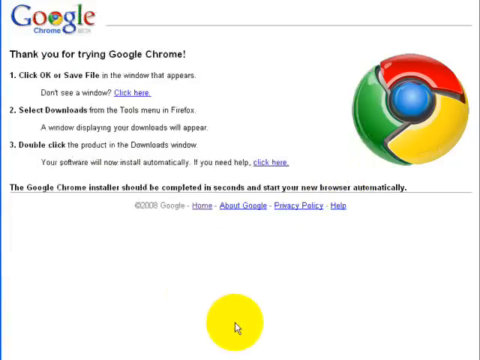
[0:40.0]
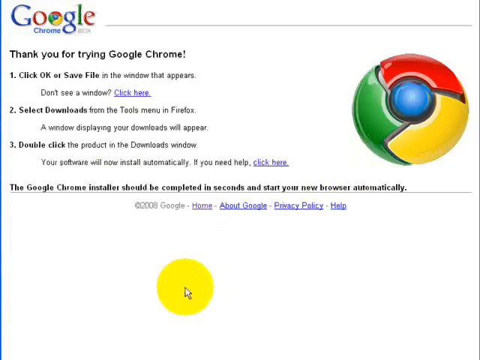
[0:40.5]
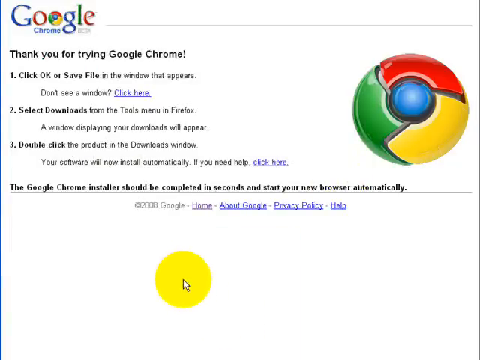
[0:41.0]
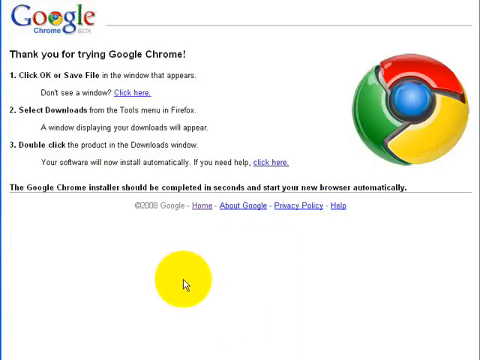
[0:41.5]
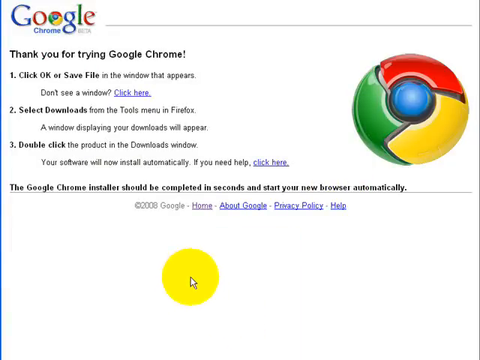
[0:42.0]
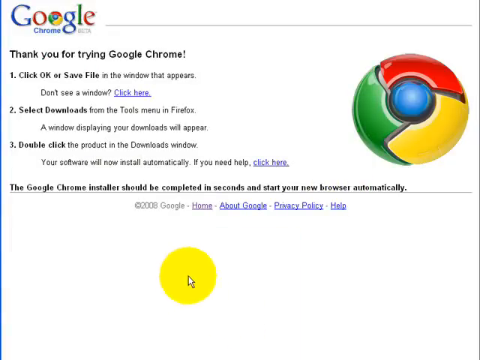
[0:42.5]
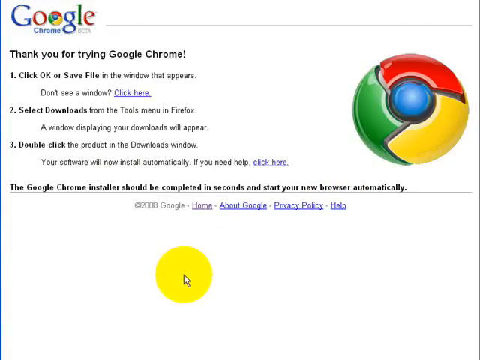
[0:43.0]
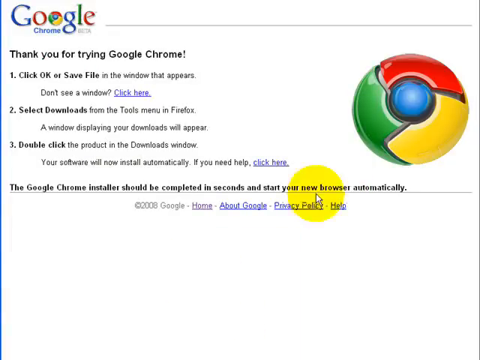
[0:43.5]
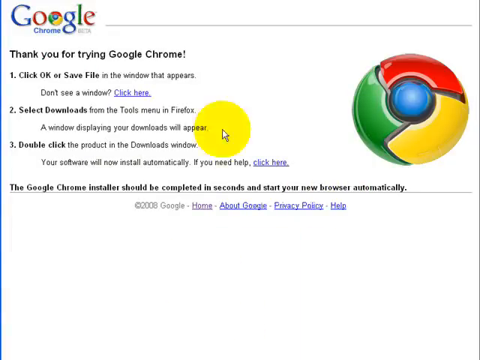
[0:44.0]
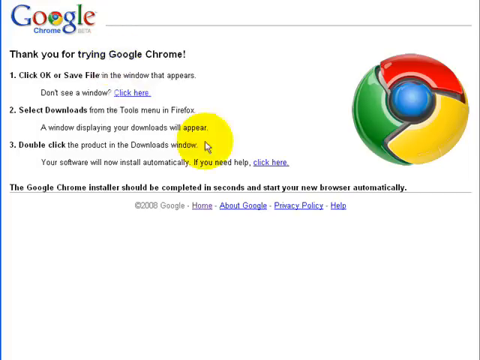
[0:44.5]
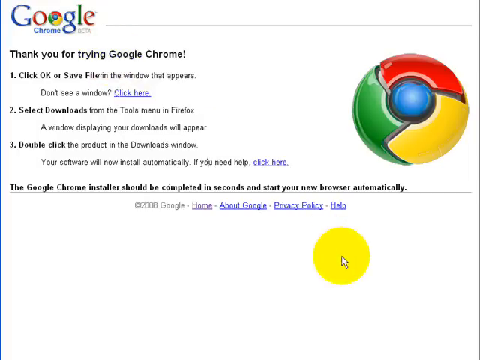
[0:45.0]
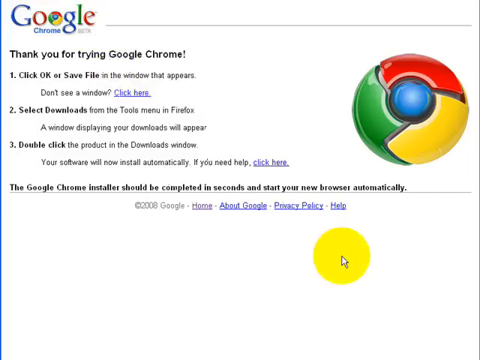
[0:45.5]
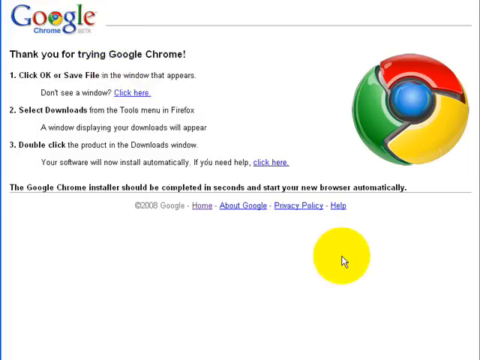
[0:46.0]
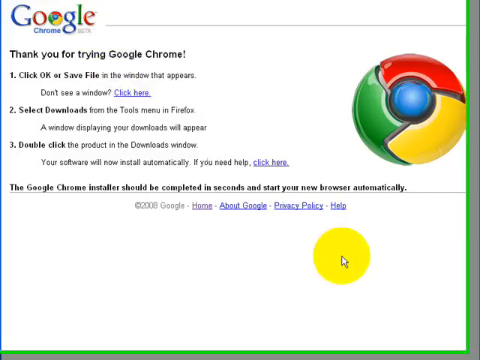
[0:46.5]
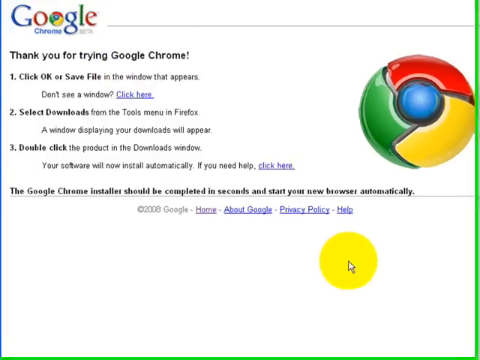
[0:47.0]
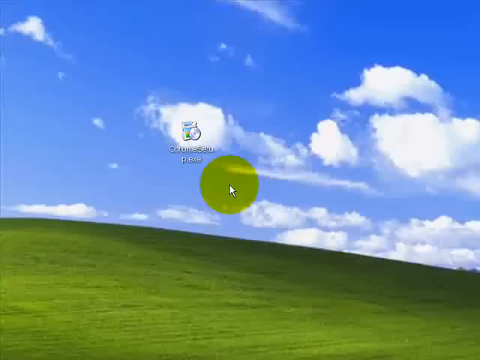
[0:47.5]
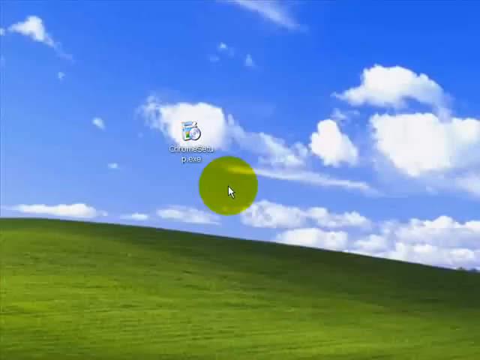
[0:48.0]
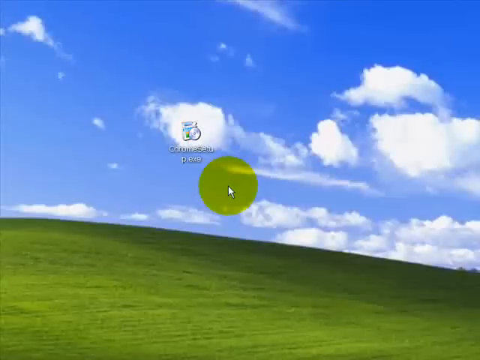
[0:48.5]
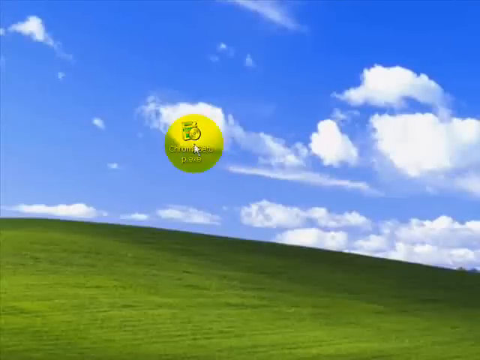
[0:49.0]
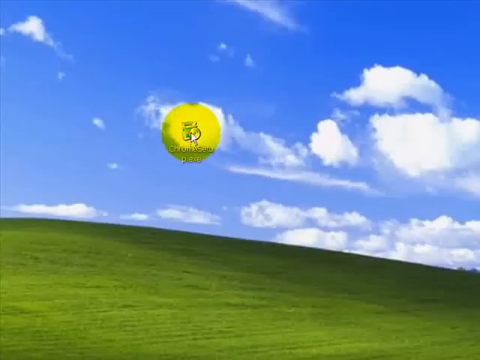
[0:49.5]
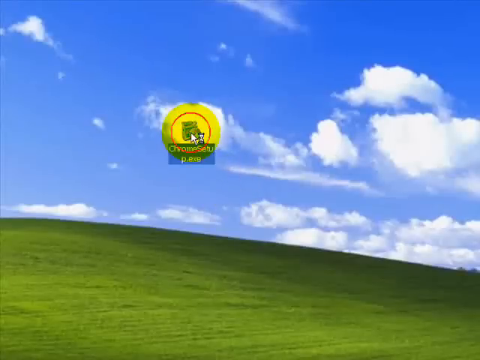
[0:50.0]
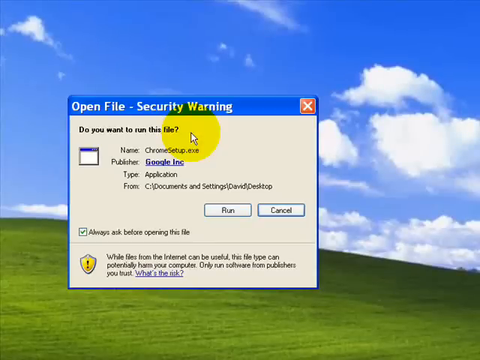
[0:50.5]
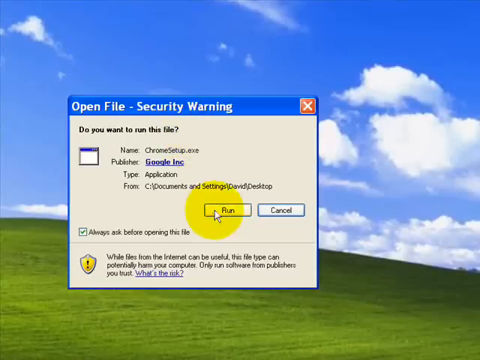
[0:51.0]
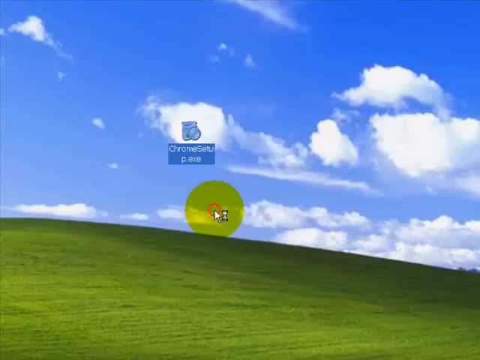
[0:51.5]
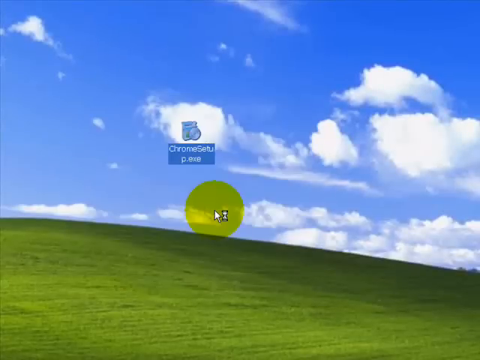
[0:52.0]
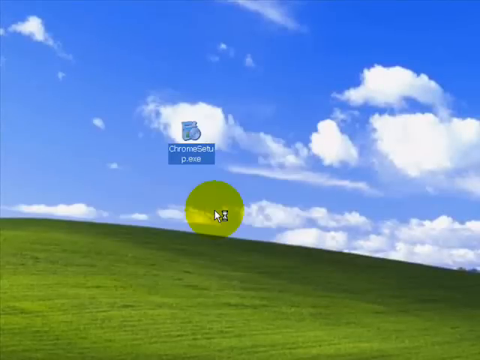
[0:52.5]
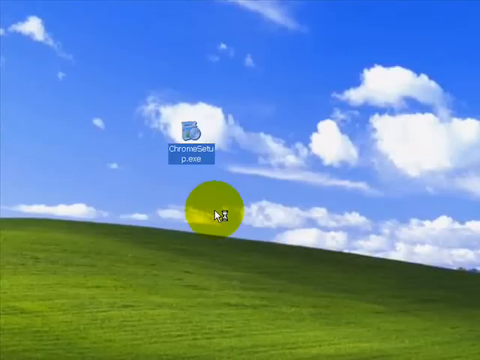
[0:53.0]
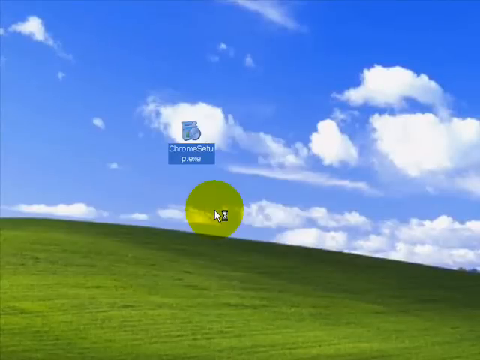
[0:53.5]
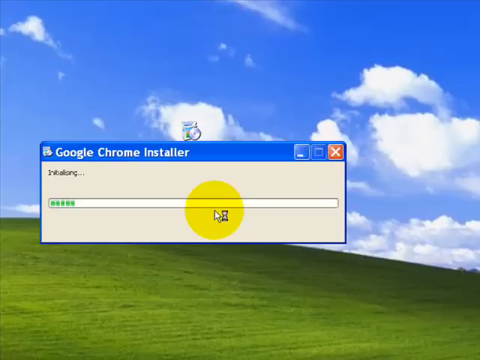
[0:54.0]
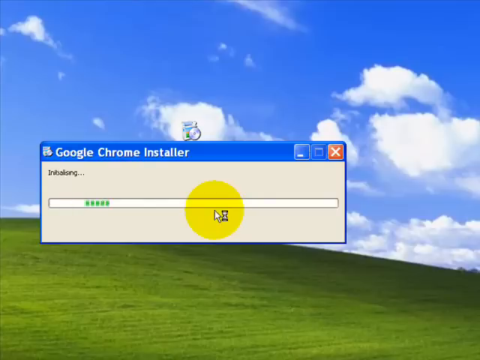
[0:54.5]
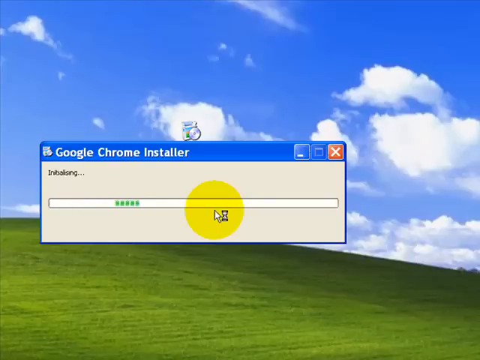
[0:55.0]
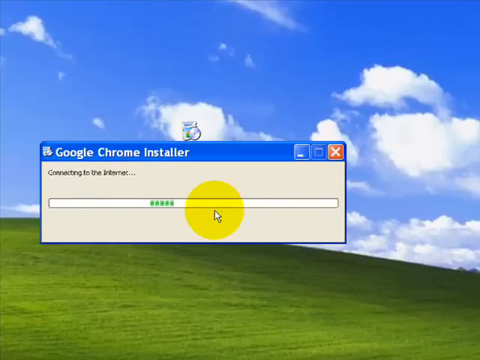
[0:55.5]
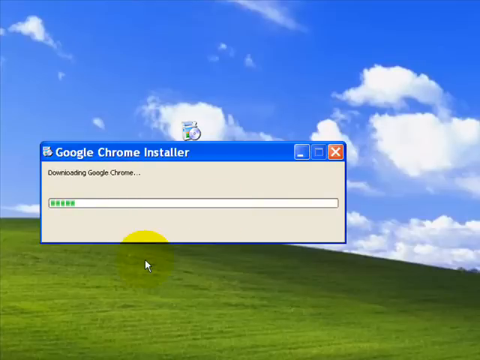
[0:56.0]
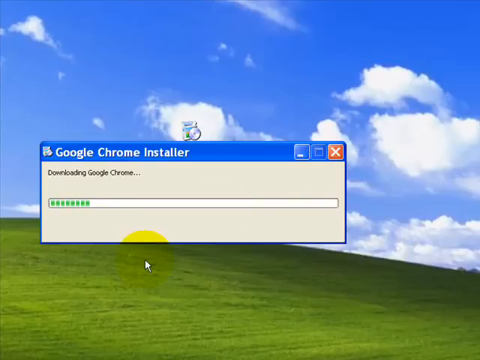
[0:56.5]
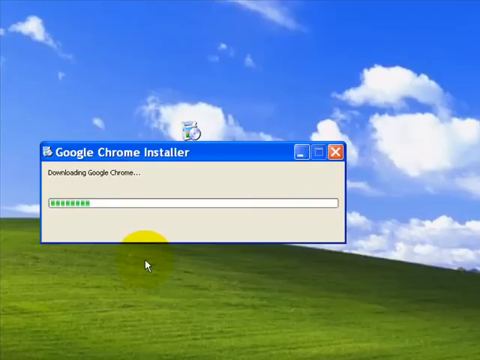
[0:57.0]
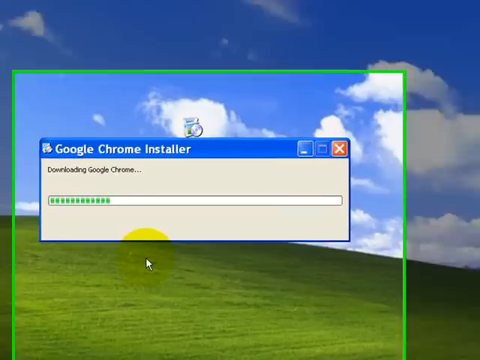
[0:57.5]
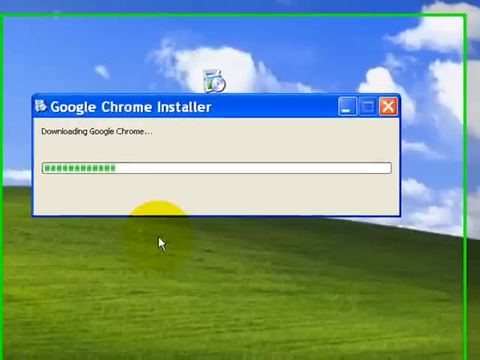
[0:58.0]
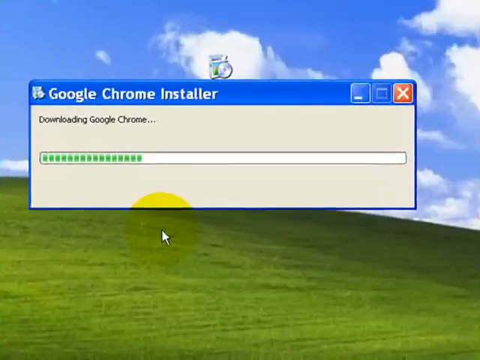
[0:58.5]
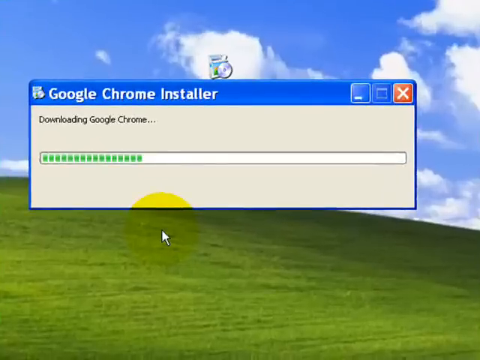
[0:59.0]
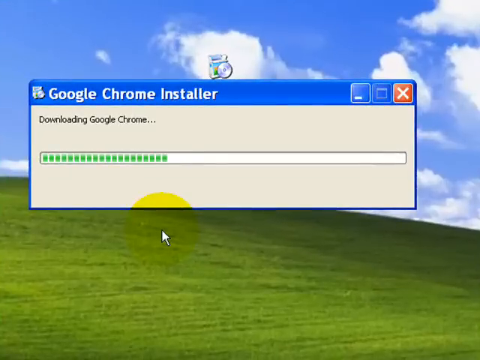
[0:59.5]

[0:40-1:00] A page reads "thank you for trying Google Chrome" and lists steps for saving the file: "click OK to save file and then select downloads. Double click the file to begin the installation." The mouse pointer, with a large yellow circle around it that makes it highly visible, moves around the page. The person goes to the desktop and double-clicks the Chrome setup icon, which opens a run box, and clicks "run." The Google Chrome installer then installs the web browser, with a green indicator moving from the left of the dialog box to the right as it fills the box, showing the installation progress.